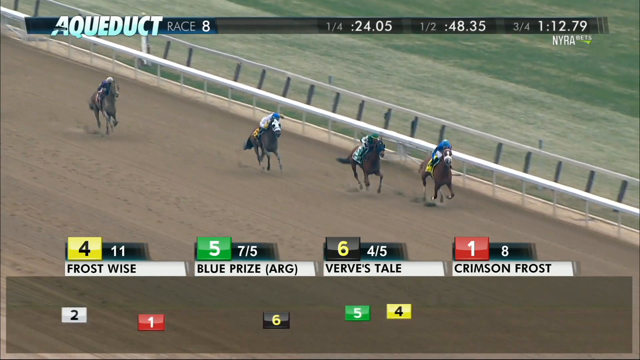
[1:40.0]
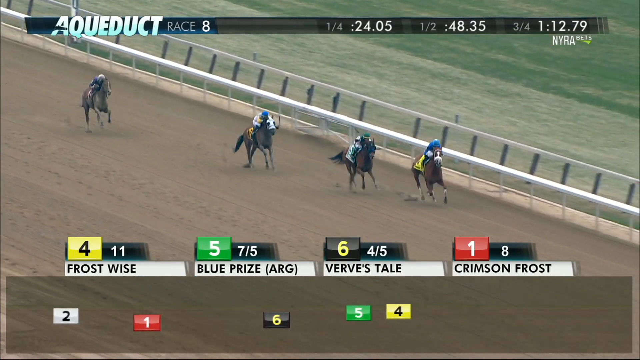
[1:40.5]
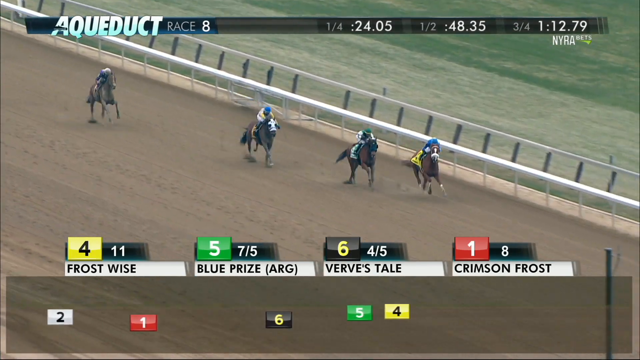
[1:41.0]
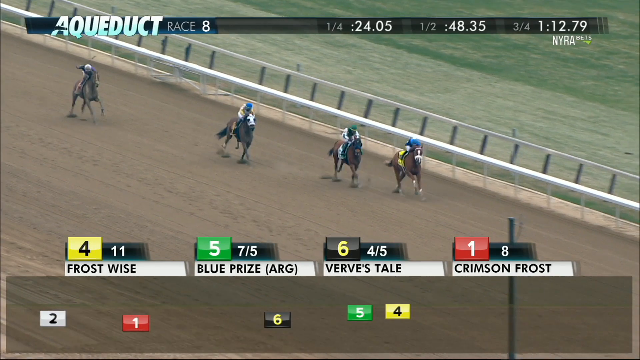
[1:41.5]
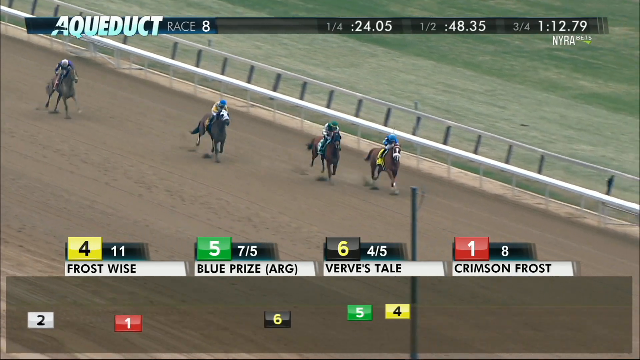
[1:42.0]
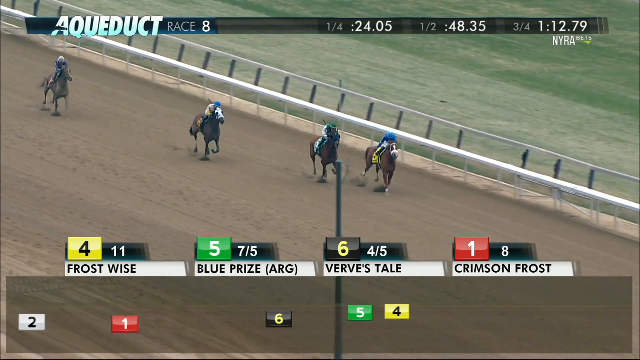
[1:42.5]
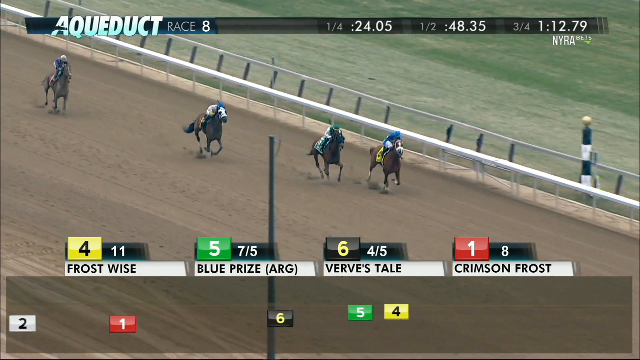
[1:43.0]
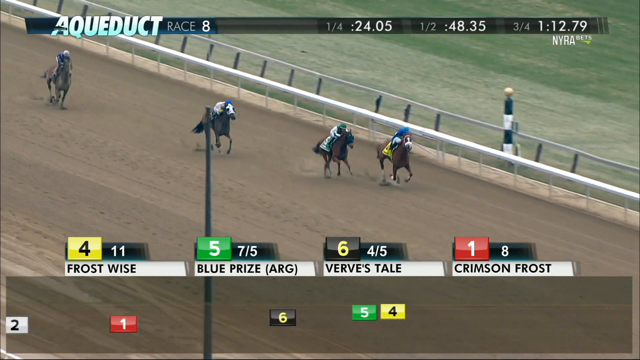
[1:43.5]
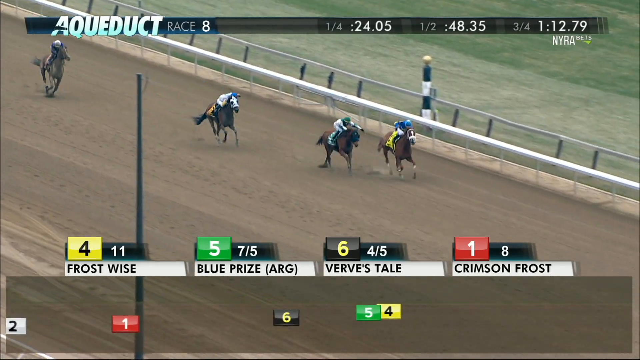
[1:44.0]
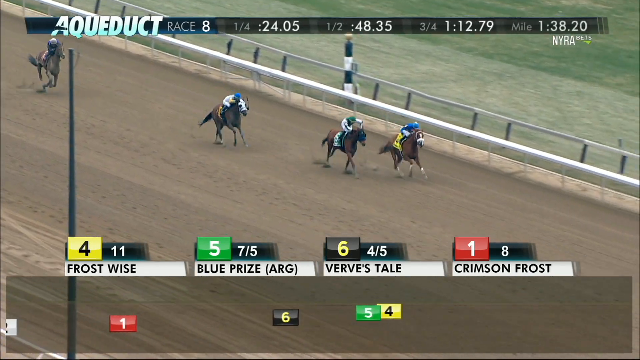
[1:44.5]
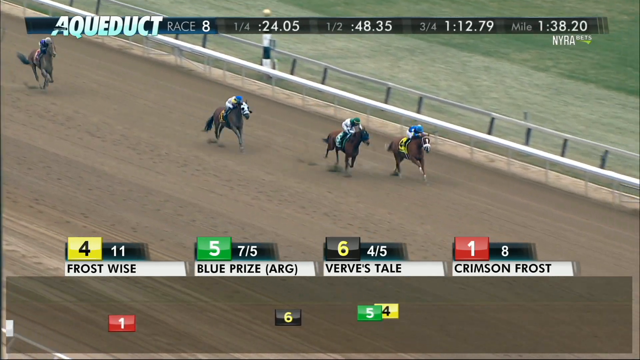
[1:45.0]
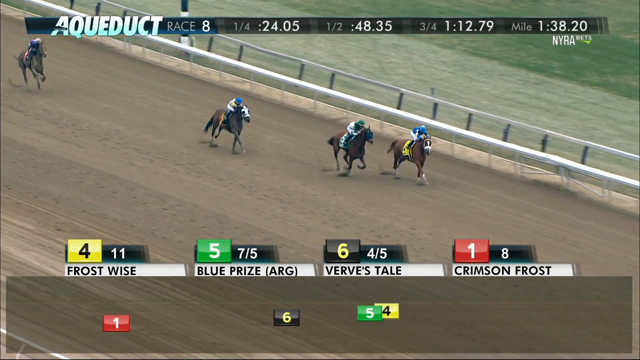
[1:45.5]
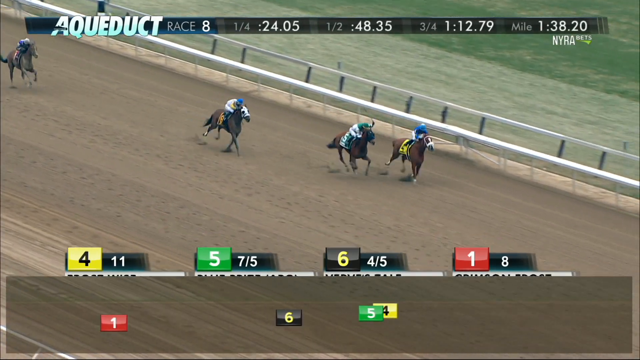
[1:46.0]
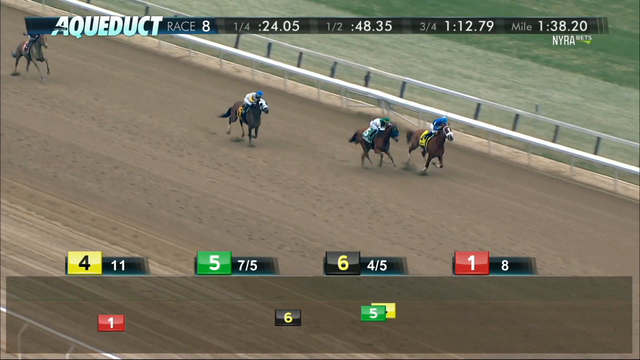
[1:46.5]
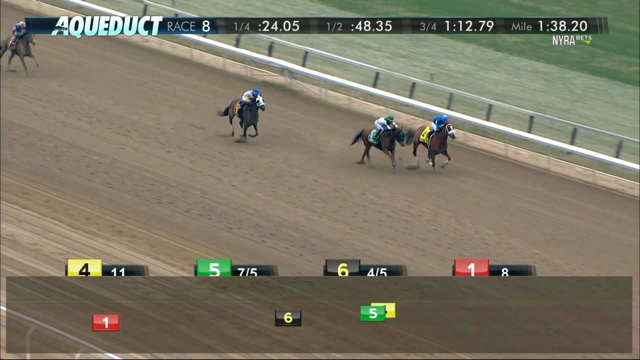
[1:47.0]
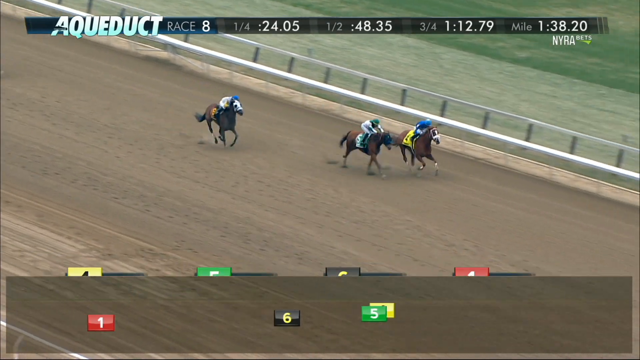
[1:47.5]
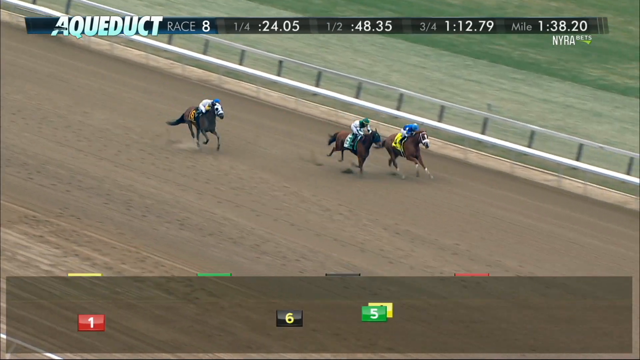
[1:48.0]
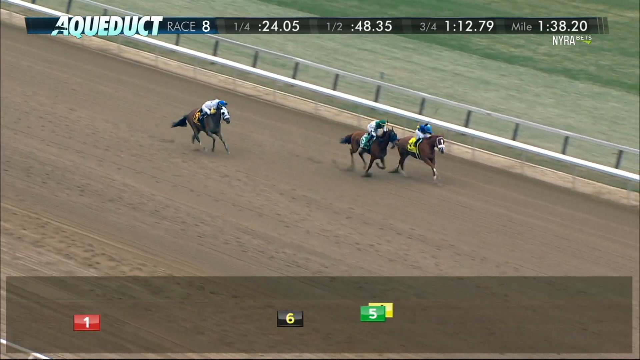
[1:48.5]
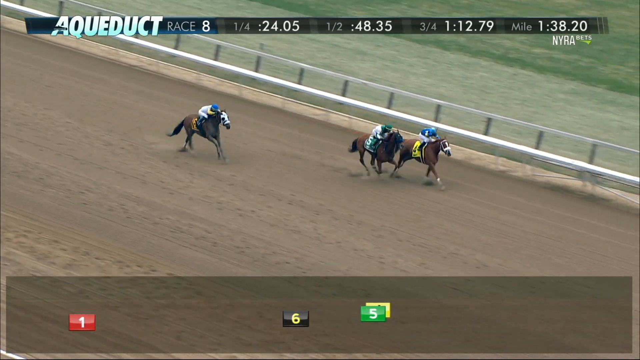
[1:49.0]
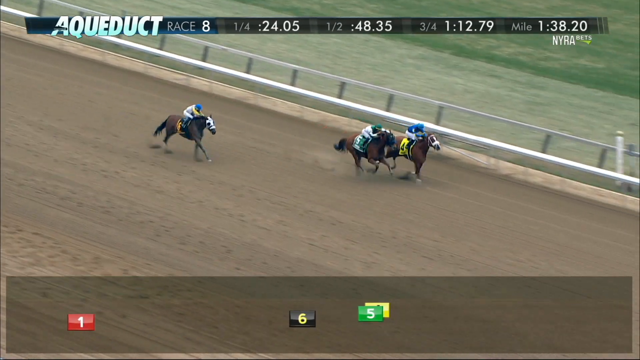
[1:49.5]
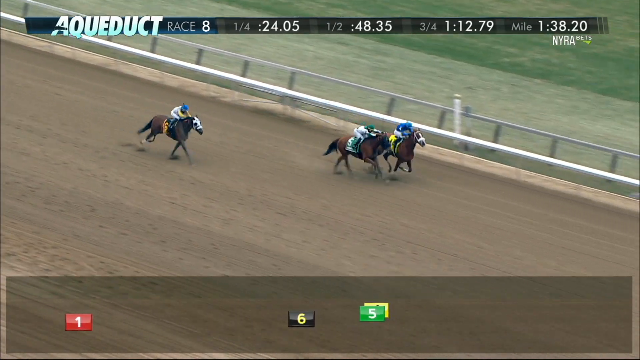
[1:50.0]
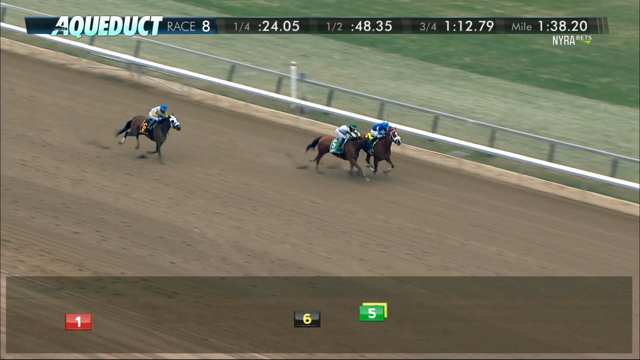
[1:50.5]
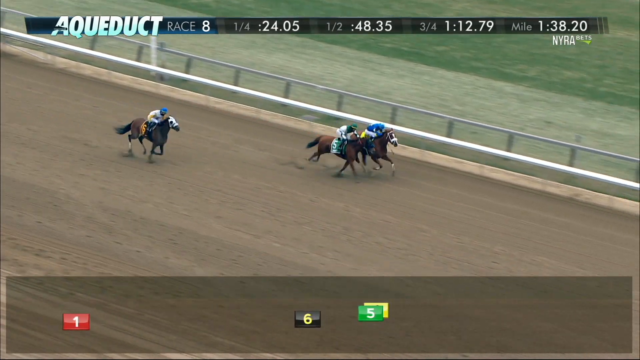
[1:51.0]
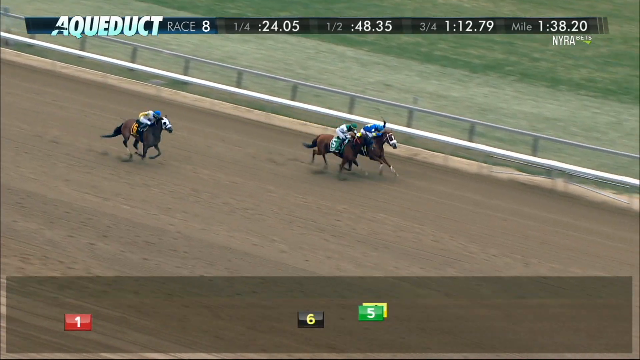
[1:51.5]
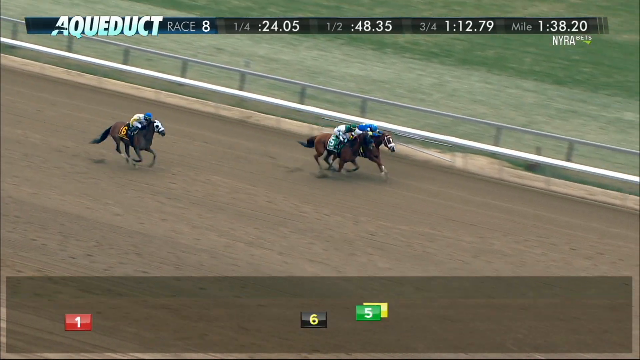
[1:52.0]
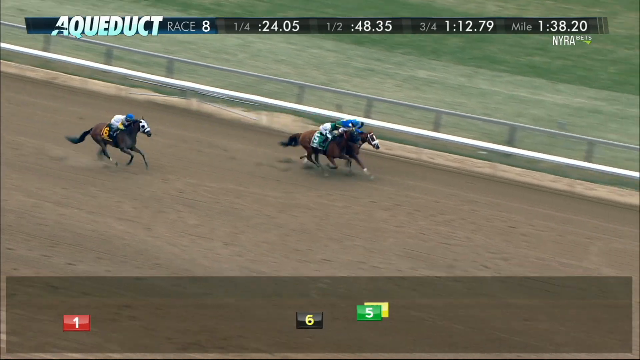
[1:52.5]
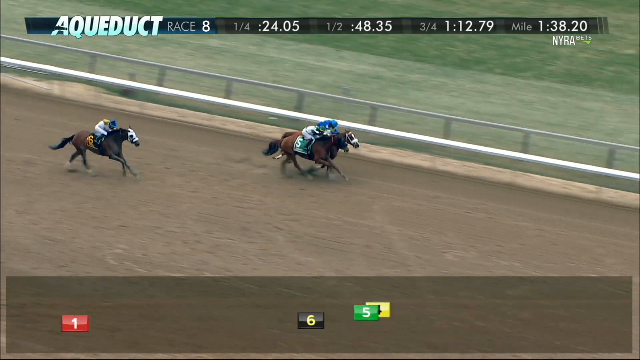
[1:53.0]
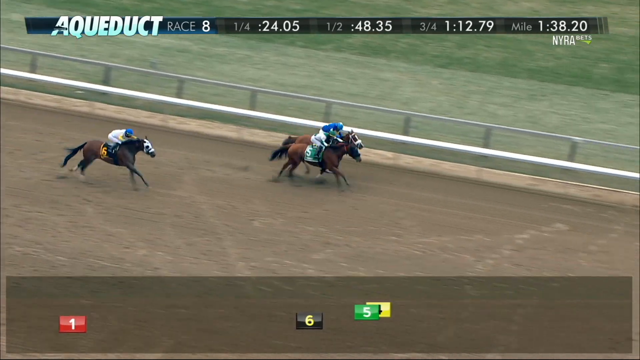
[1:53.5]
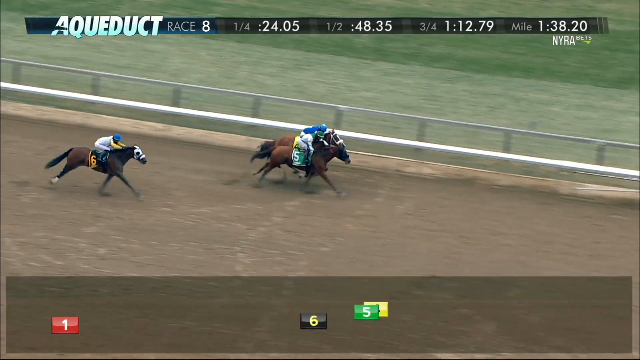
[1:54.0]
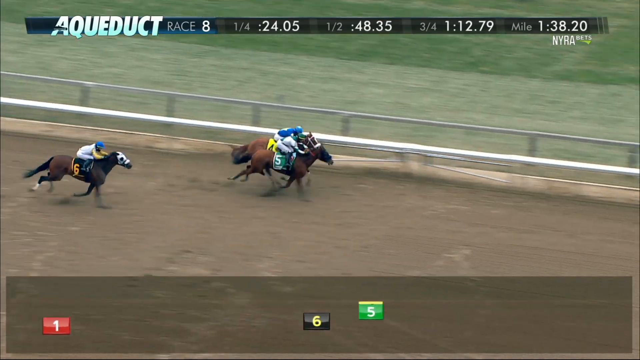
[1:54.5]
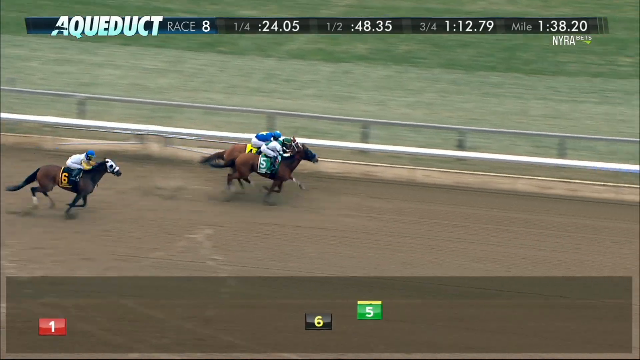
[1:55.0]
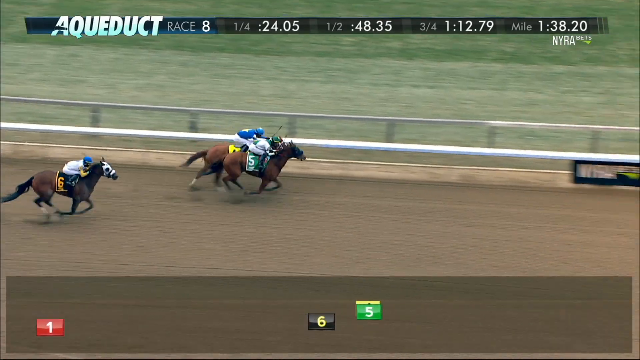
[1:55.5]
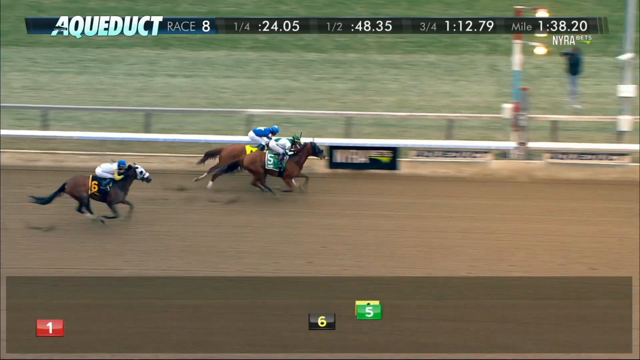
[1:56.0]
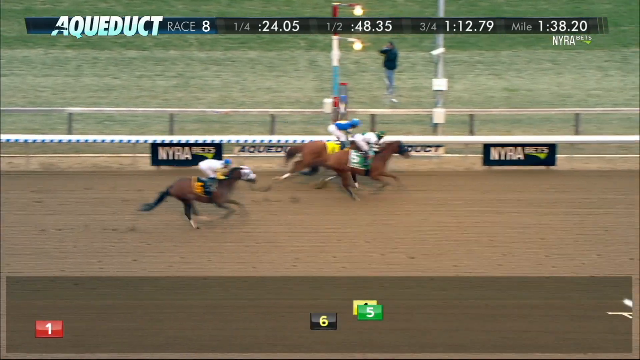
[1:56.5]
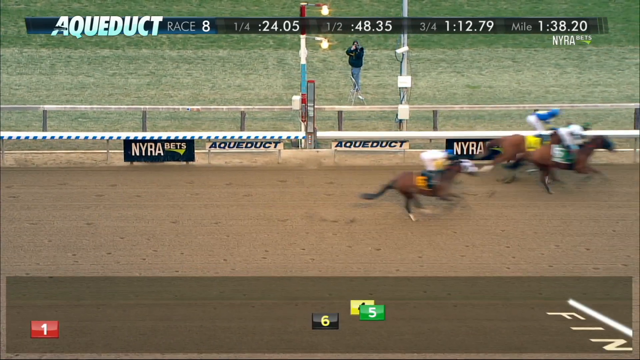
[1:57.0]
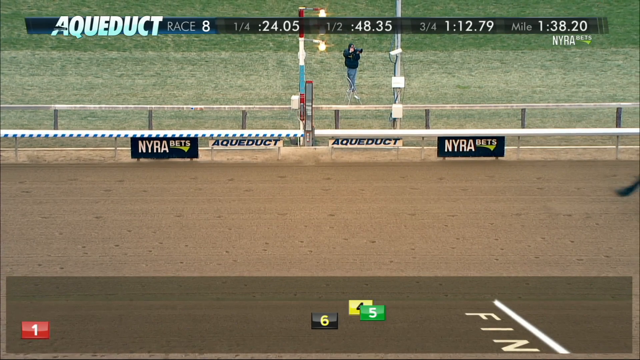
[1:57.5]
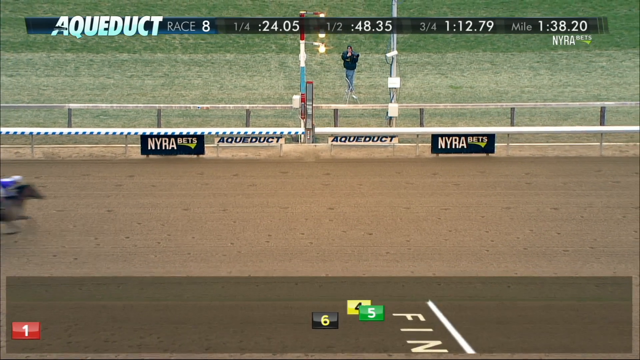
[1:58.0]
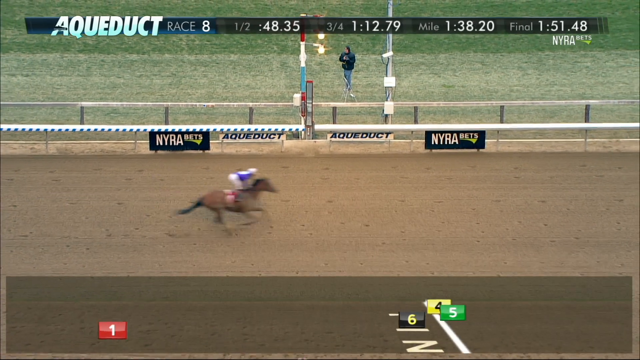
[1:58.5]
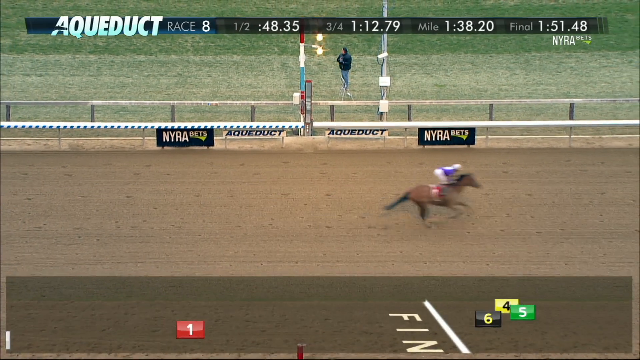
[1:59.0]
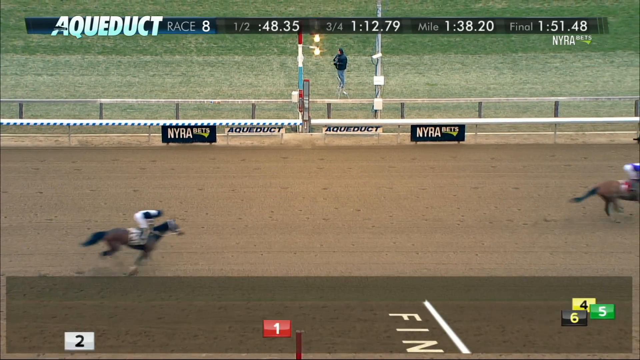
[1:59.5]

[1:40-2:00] The horses are in the final stretch. Frostwise is still leading, Blue Prize is second, Versus Tail third, and Crimson Frost a distant fourth, with the other horses fallen off. It looks like a two-horse race between Frostwise and Blue Prize, and Blue Prize starts to catch up. The mile split shows 1:38.2, leaving an eighth of a mile to go. Blue Prize is right on the heels of Frostwise, and both jockeys smack their horses to go faster. The two are almost neck and neck, and Blue Prize overtakes Frostwise just at the end of the race to win in a very close finish, coming from second place.